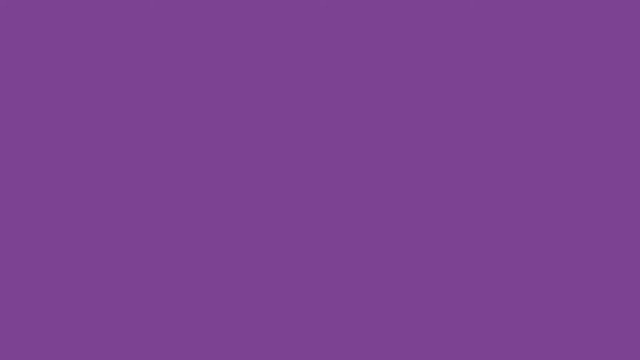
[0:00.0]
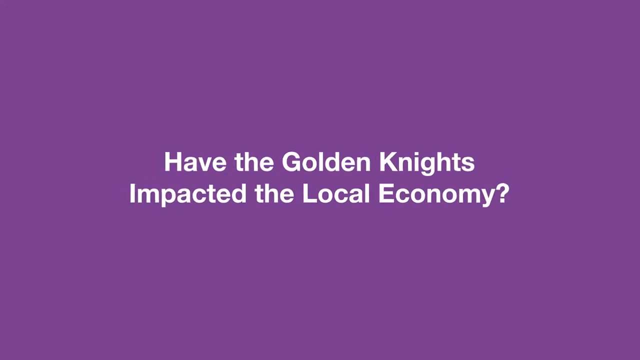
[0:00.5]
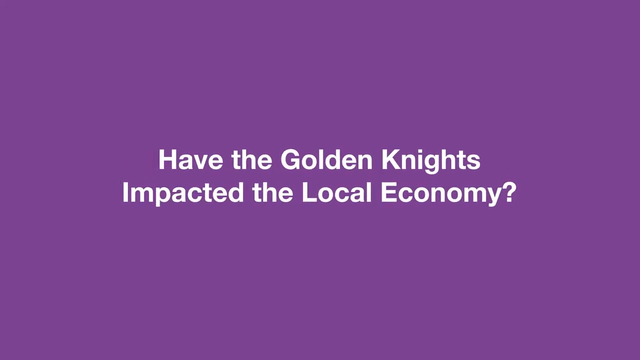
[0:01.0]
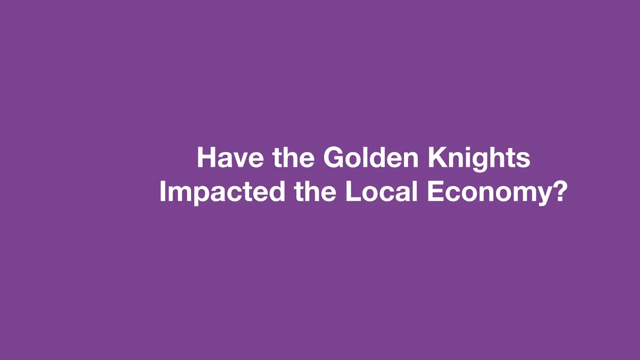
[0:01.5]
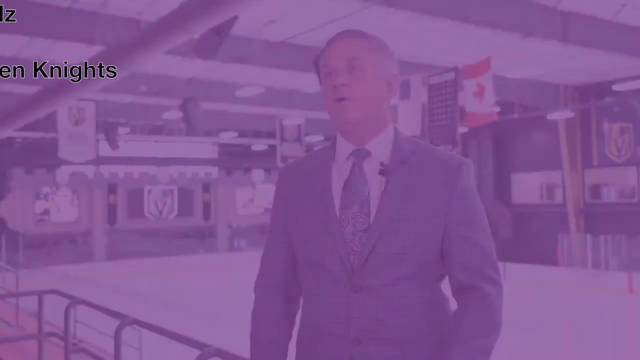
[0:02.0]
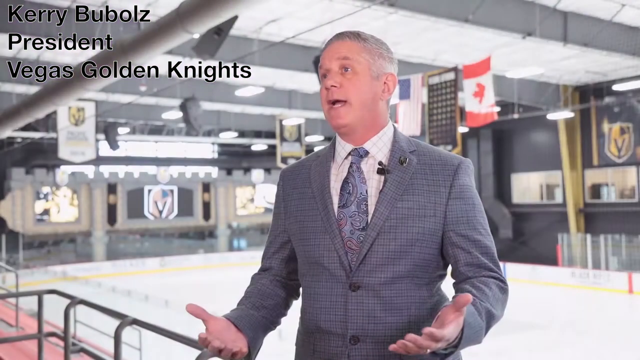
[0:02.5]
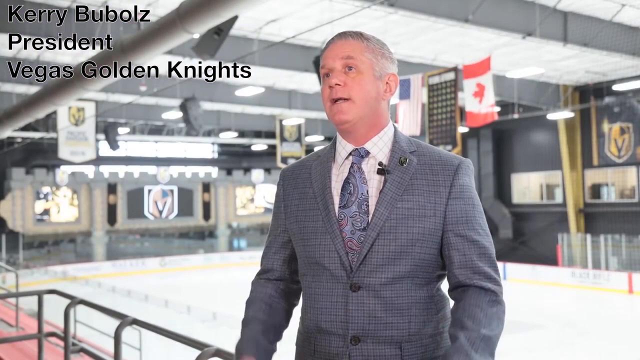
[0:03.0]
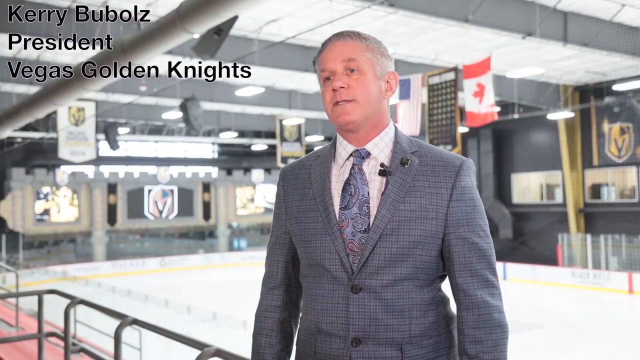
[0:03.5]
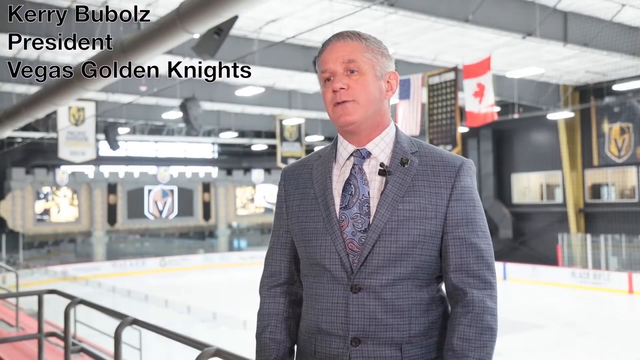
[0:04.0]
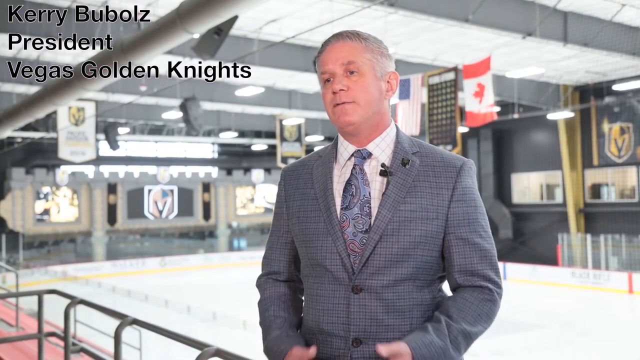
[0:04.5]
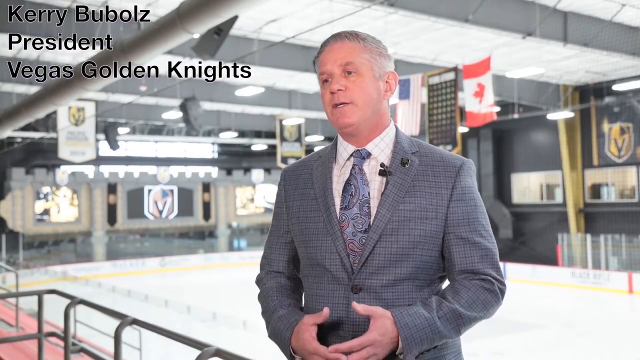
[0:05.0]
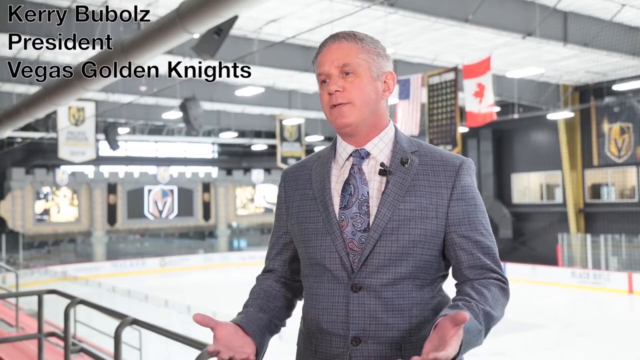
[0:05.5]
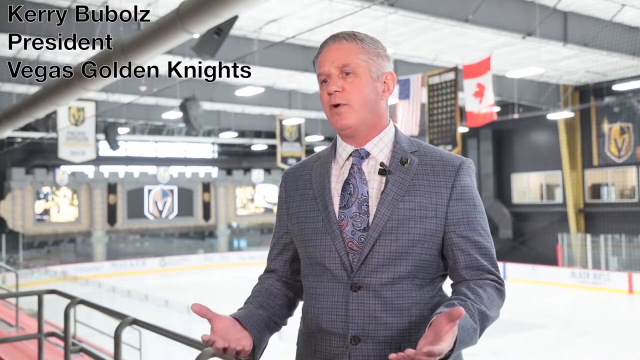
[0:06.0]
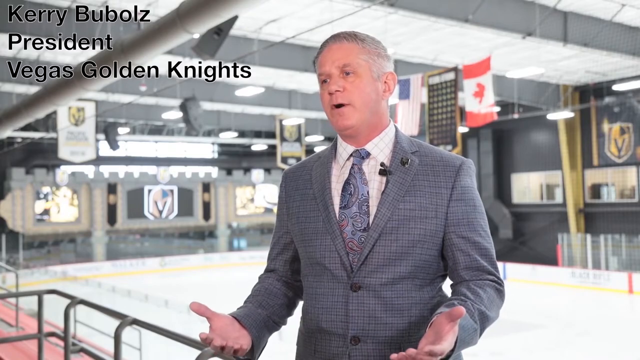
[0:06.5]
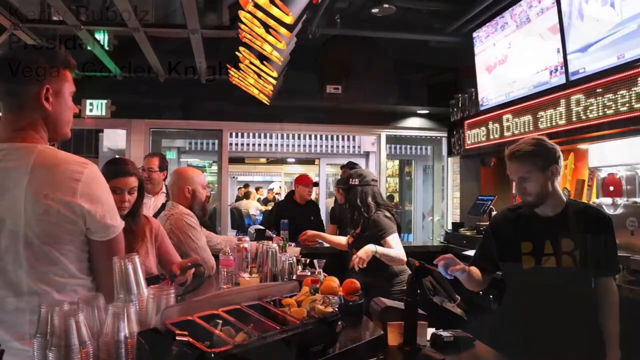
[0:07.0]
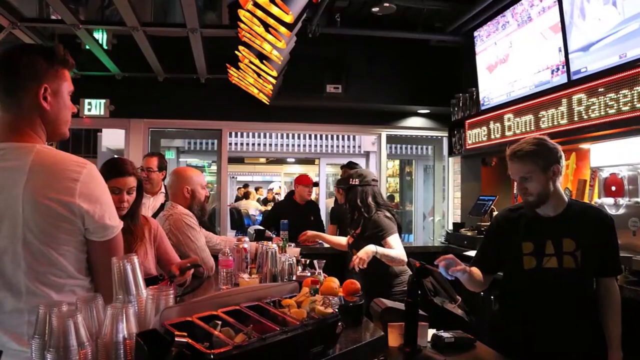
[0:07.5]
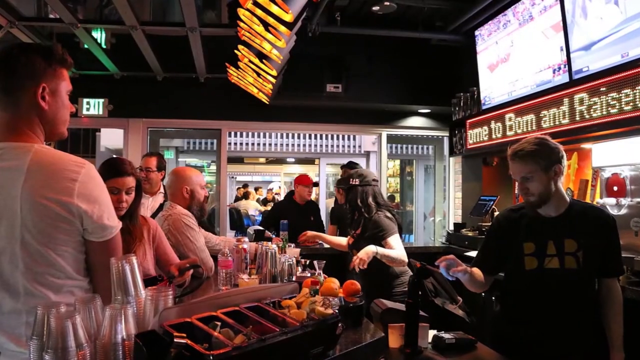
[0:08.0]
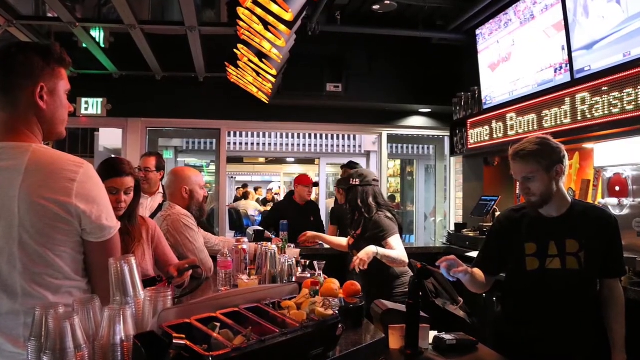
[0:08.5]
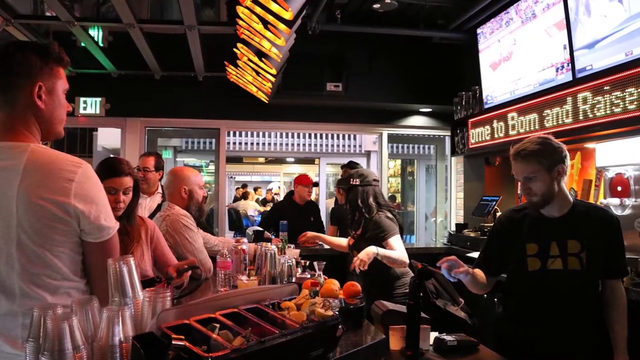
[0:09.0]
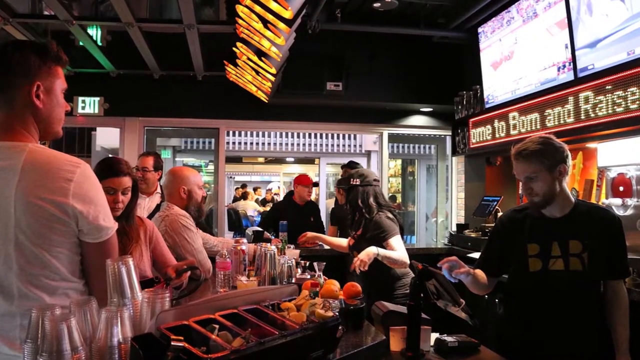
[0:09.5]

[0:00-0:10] A plain purple screen has a black gradient across the bottom 20% that gives an illusion of depth. Somewhat white text scrolls onto the screen from the middle right of the frame and moves to the middle, taking up a decent chunk of the screen; it asks, "have the Golden Knights impacted the global economy?" The text comes toward the camera briefly, holds position at a slightly larger size for a couple of seconds, and scrolls off the left side of the frame. The scene transitions to a live or video shot of an older Caucasian man with close-cropped white hair, wearing a gray suit, a gray tie and a white shirt. A black caption in the upper left of the frame identifies him as Kerry Bubles, President, Vegas Golden Knights. Behind him is an indoor room with banners on the wall bearing logos with something like a V or Y shape, a five-pointed shape kind of like a rectangle with a chevron at the bottom; this Y or arrow symbol is throughout the room, and there is a flag behind him. He faces to the left, his eyes on something in the distance past the camera on the left side of the frame. The area beneath him is gray and looks like perhaps an athletic arena. He speaks and gestures with his hands, elbows bent so his hands are out at about waist level or a little higher. The shot dissolves to the interior of a restaurant or bar, with a bar counter in the middle of the frame at the bottom. A couple of service workers behind it wear black t-shirts with a company logo that is hard to read. Many people, mostly in white shirts, are crowded at the counter, which has things like oranges and drinks on it. Through an open doorway in the middle of the frame more people are coming in or going out. It is a still shot, and the camera comes in on it. A big lit sign that cannot be read is above the middle of the frame, and text in the upper right includes "born and raised", apparently clipped. The scene then transitions out.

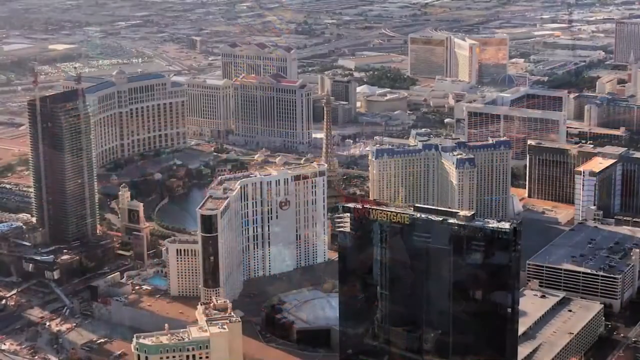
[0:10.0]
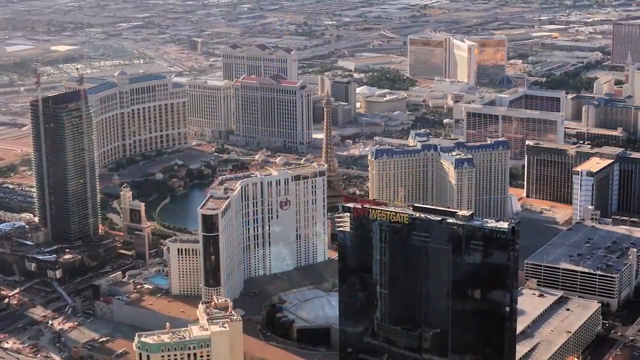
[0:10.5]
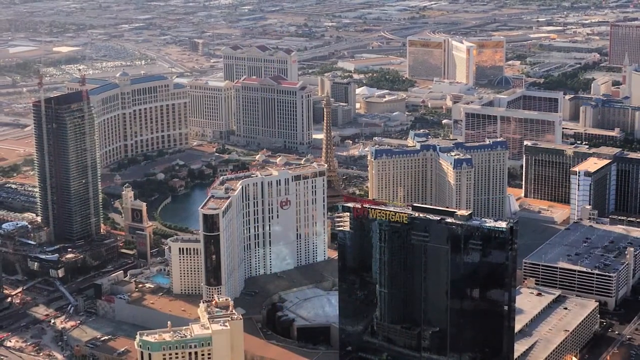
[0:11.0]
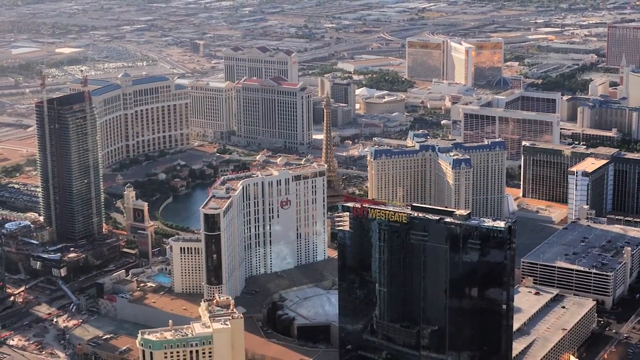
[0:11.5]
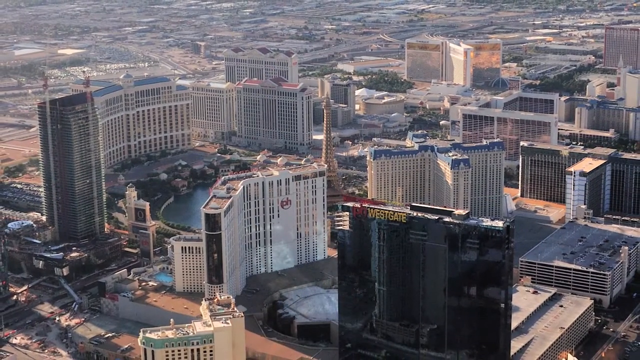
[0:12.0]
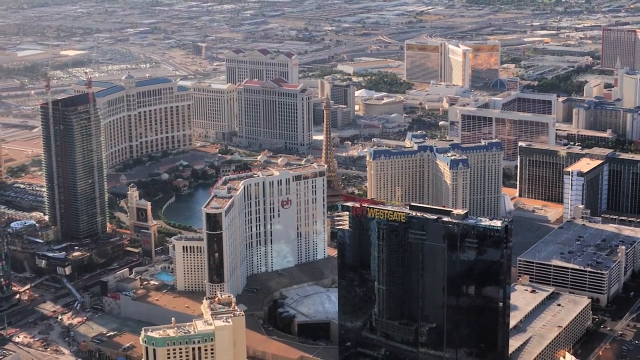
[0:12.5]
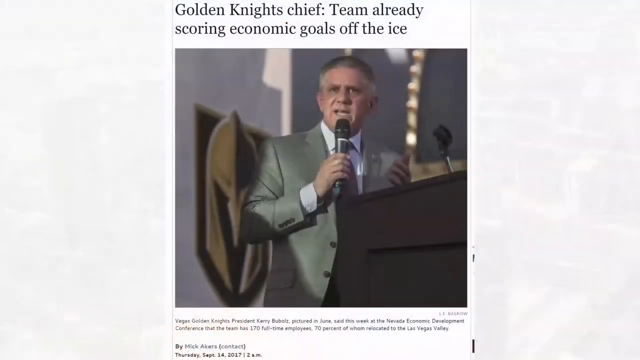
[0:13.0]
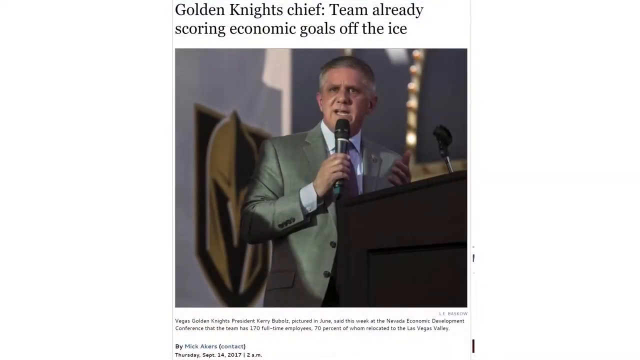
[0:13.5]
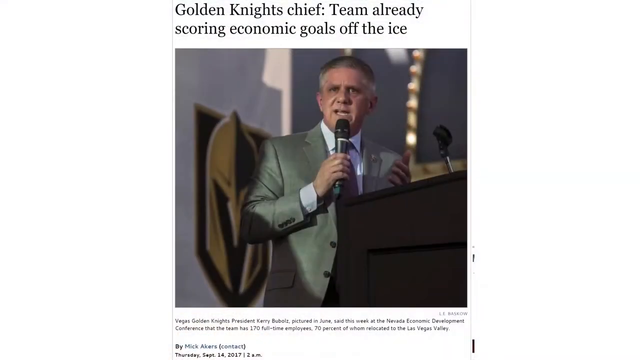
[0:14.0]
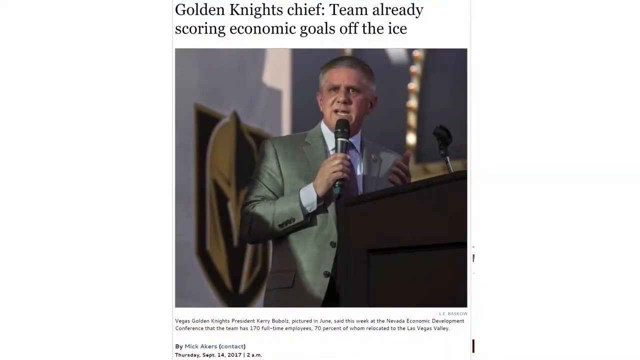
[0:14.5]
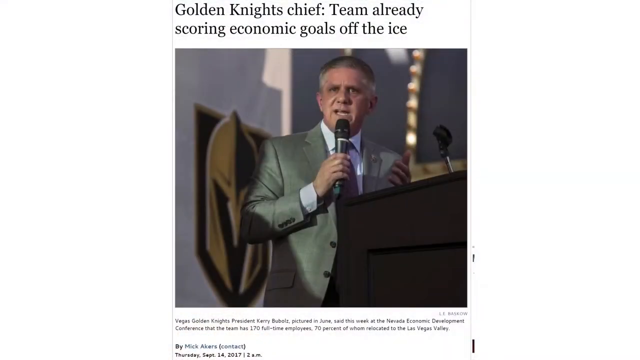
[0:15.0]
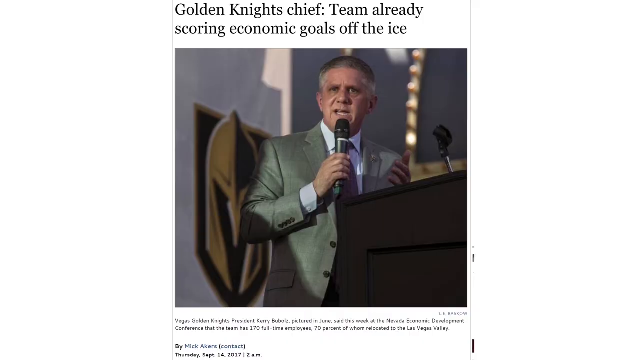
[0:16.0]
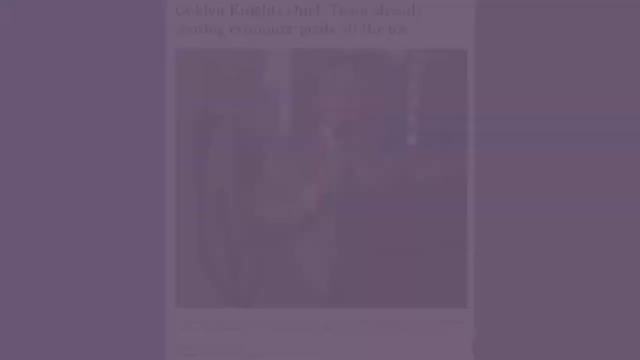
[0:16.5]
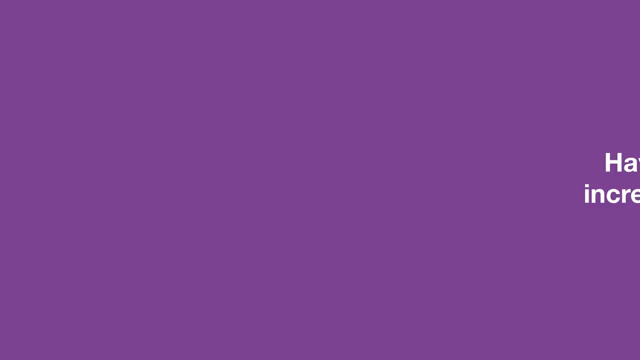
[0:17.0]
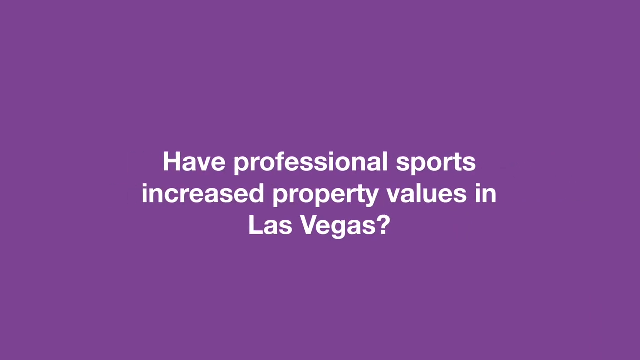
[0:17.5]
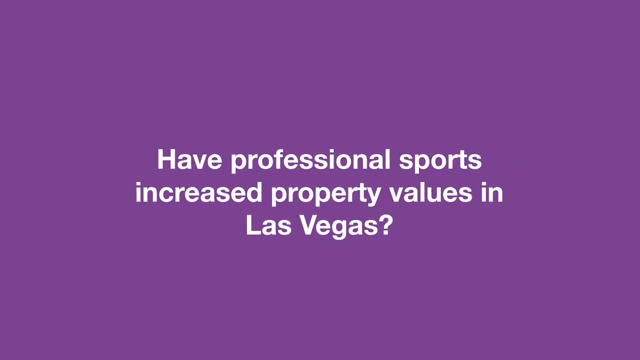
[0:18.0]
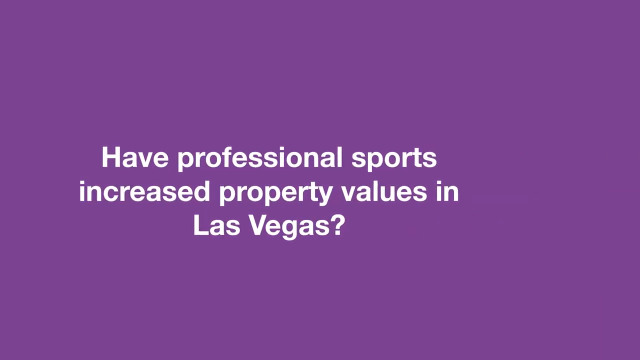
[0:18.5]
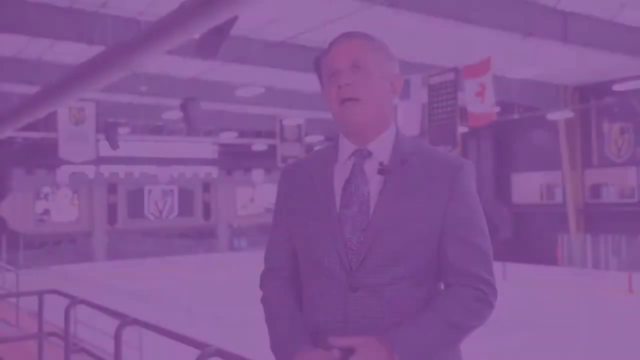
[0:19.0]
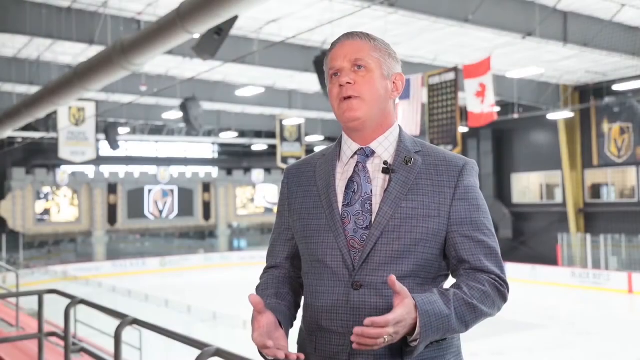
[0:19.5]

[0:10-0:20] A high aerial view shows a city in daytime with a number of very tall buildings. A pool of water is between some of them on the left side of the frame, and some shadow, perhaps from clouds, falls more over the right side of the frame, kind of diagonally. One of the buildings in the lower right is labeled Westgate. It is a still shot, and the camera pulls back from it a little. The video cuts to a still picture of apparently the man seen earlier, Kerry Bubles, the president of the Golden Knights. A black caption above the picture says "Golden Knights Chief. Team already scoring economic goals off the ice." The background boxing it in is white with a gradient toward the bottom of the screen, and the view holds for a little while. A caption below is too small to read. The screen transitions to a purple backdrop with a gradient at the bottom, and white text scrolls in from the right: "have professional sports increased property values in Las Vegas". It comes outward toward the camera a little and then scrolls off to the left. The video cuts back to Kerry Bubles, apparently perhaps in the athletic area, and he starts speaking.